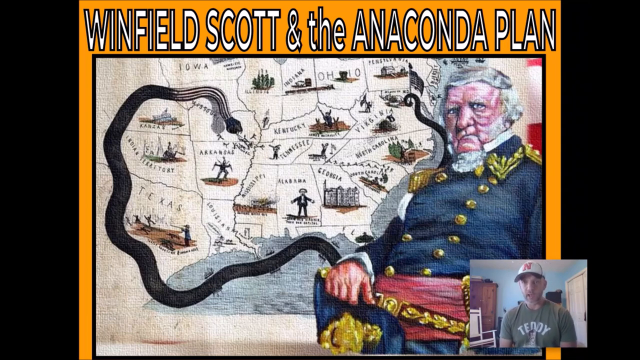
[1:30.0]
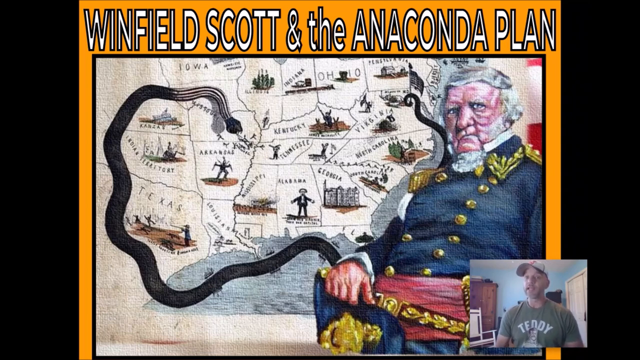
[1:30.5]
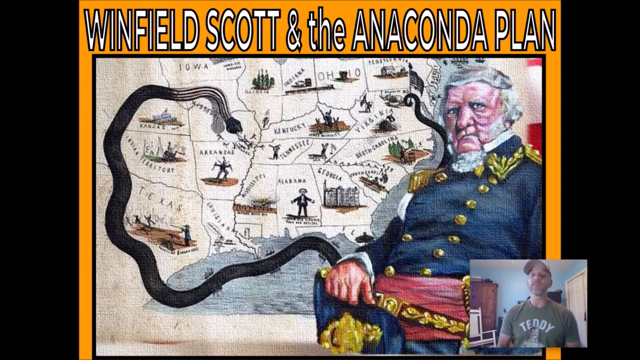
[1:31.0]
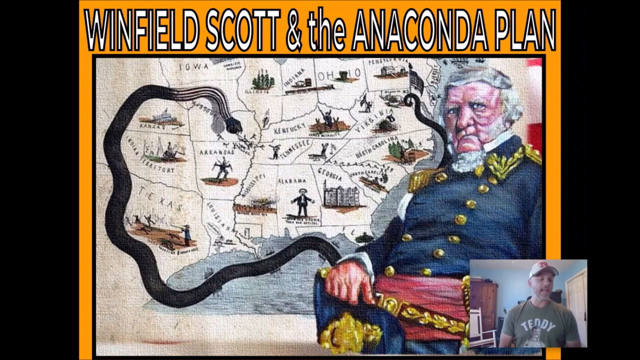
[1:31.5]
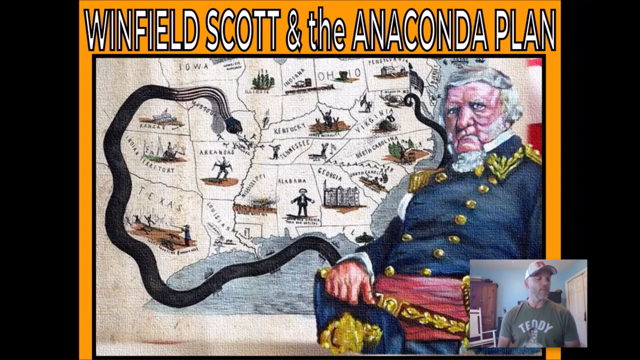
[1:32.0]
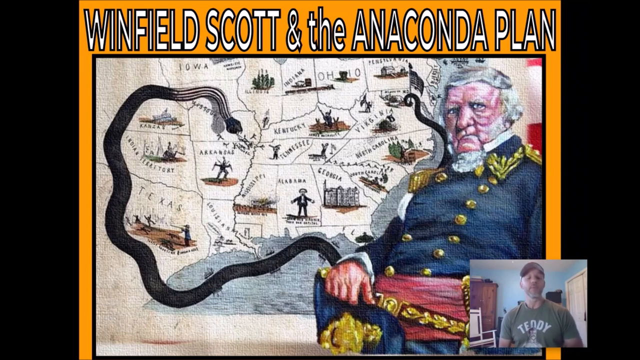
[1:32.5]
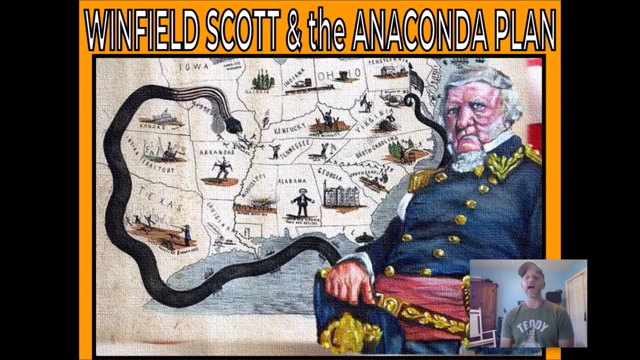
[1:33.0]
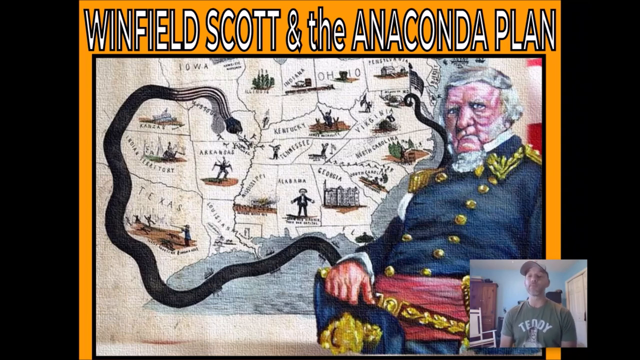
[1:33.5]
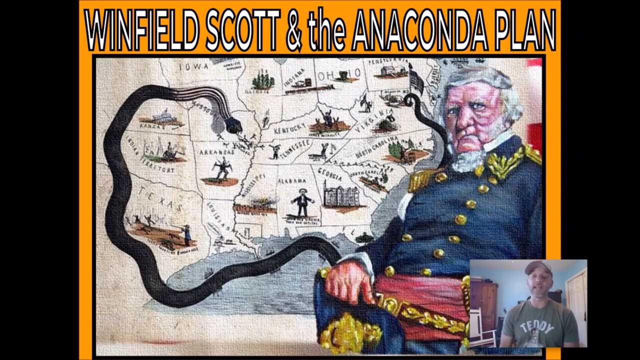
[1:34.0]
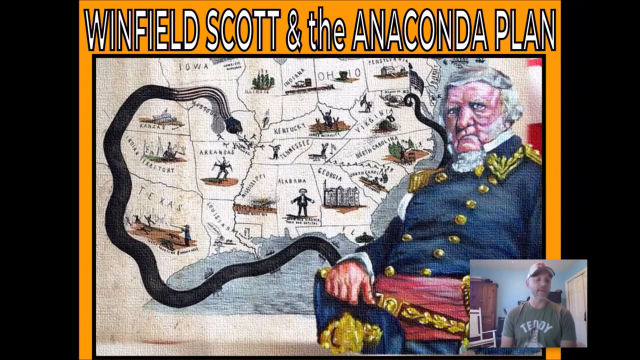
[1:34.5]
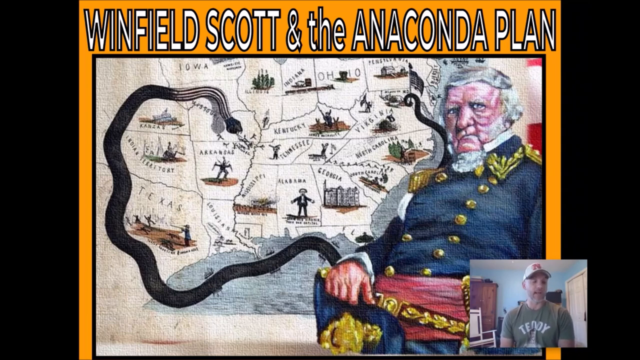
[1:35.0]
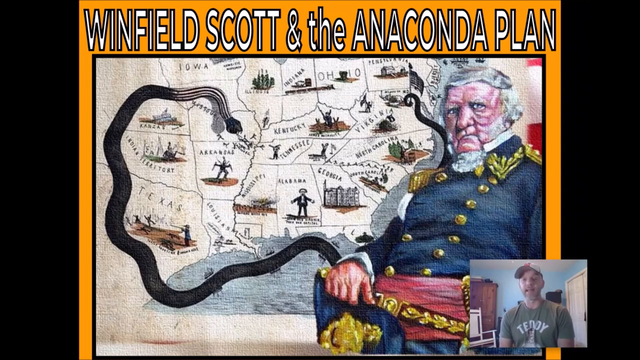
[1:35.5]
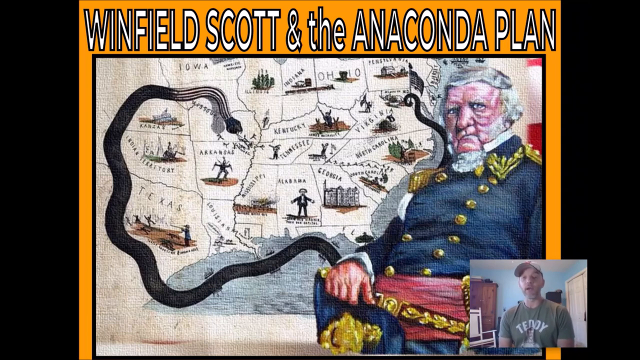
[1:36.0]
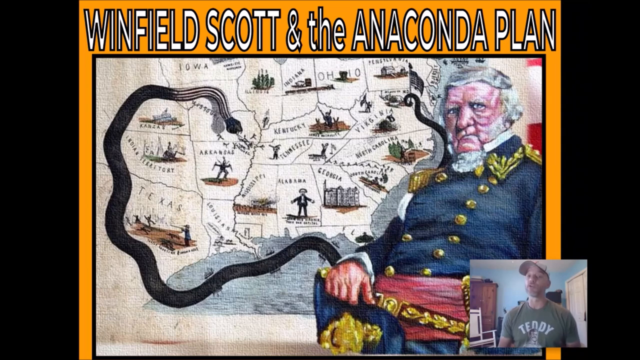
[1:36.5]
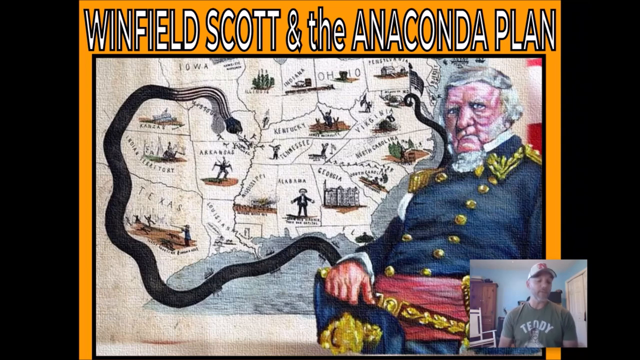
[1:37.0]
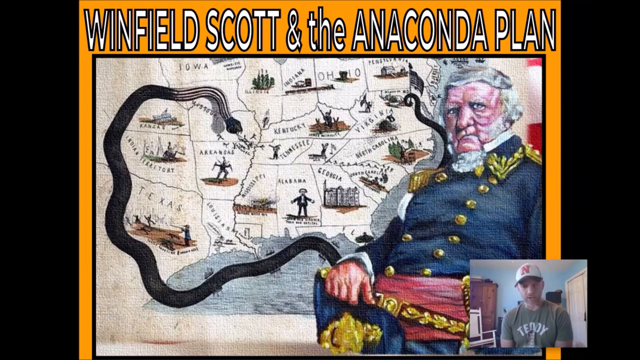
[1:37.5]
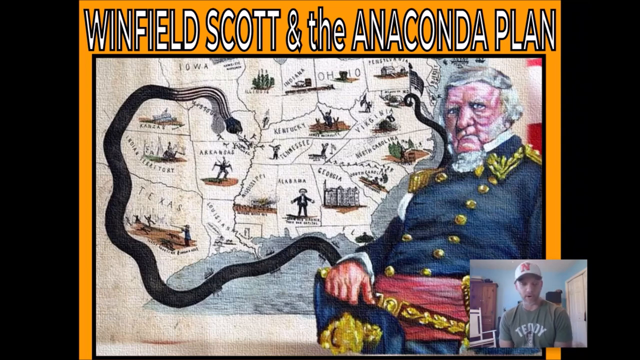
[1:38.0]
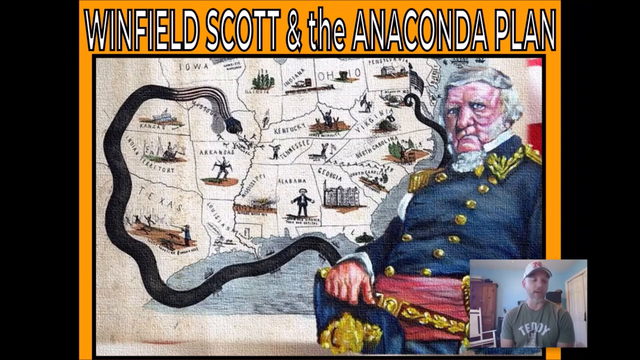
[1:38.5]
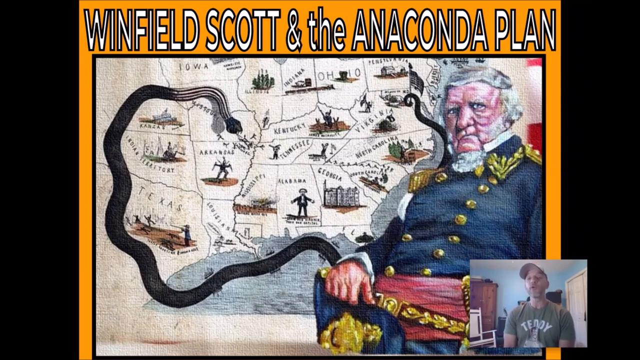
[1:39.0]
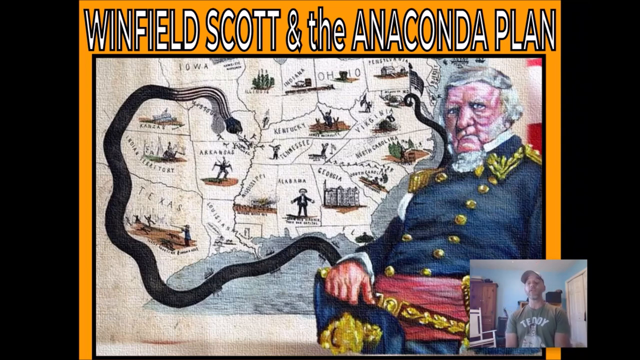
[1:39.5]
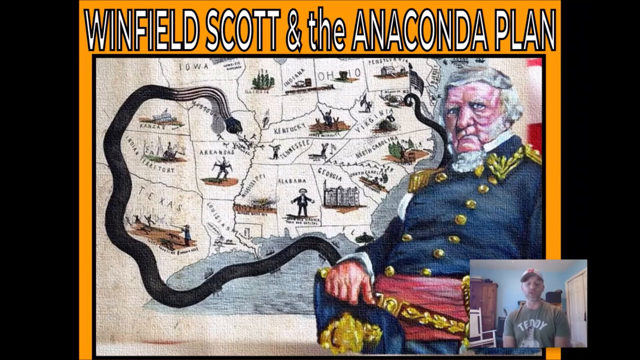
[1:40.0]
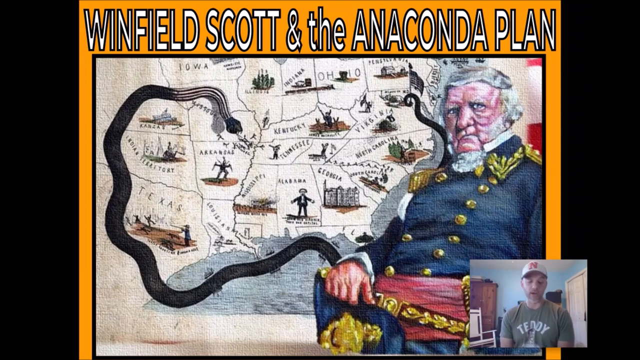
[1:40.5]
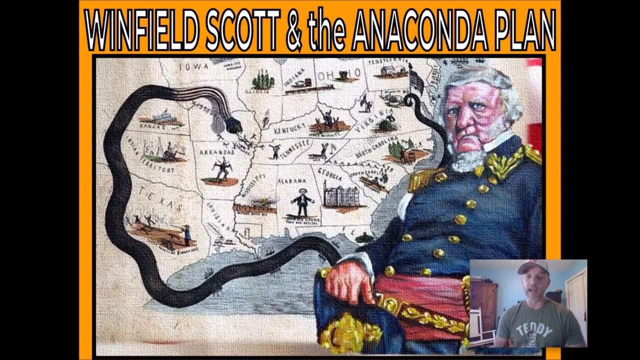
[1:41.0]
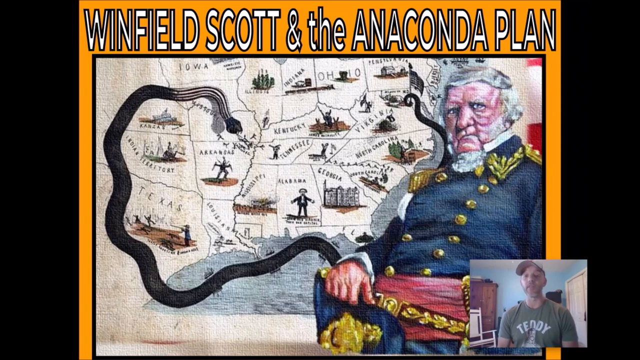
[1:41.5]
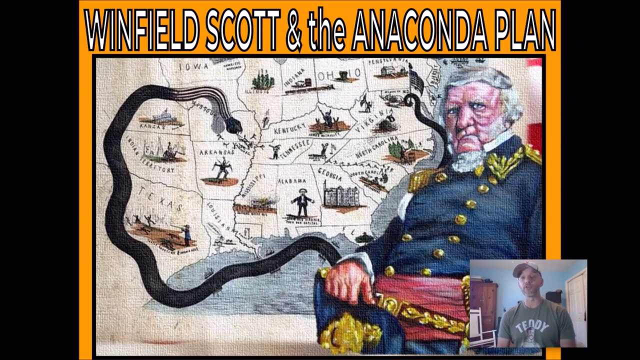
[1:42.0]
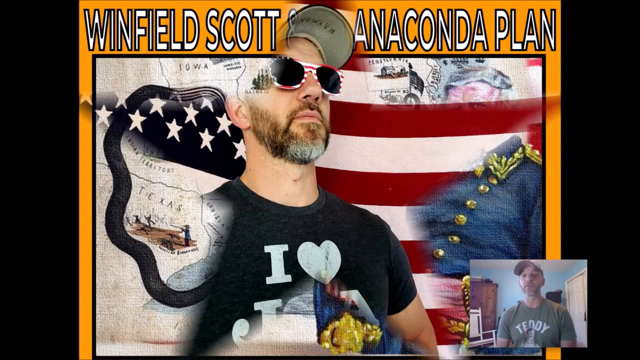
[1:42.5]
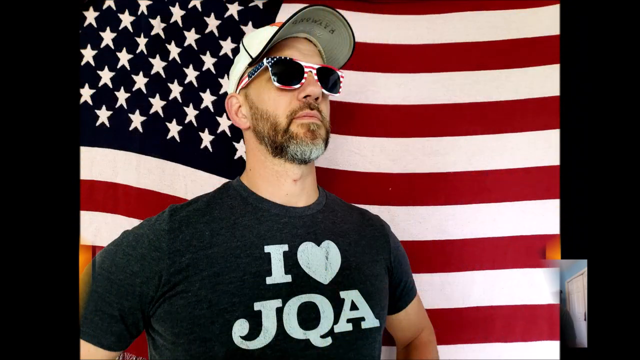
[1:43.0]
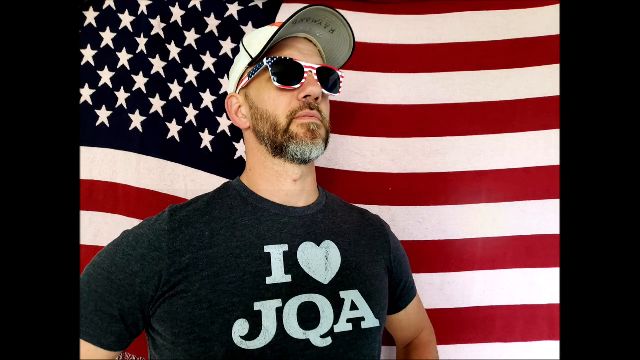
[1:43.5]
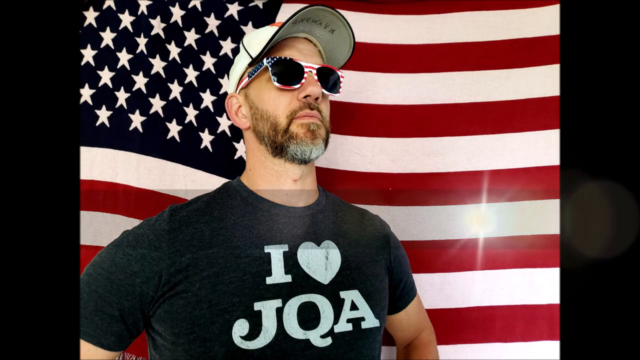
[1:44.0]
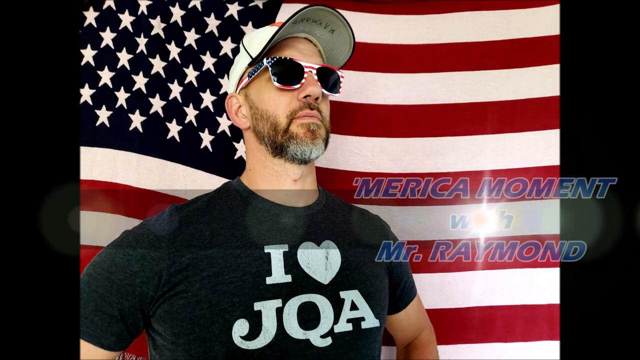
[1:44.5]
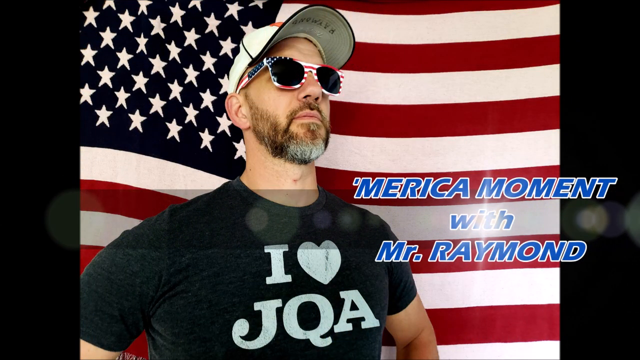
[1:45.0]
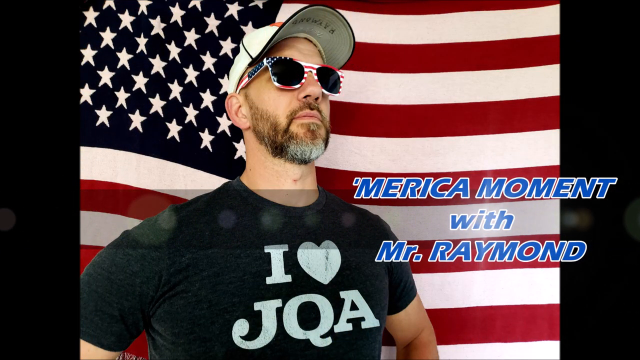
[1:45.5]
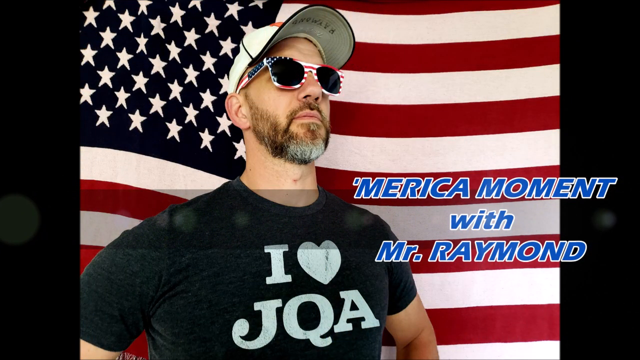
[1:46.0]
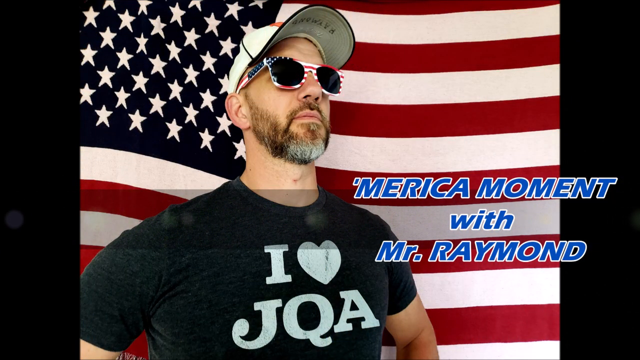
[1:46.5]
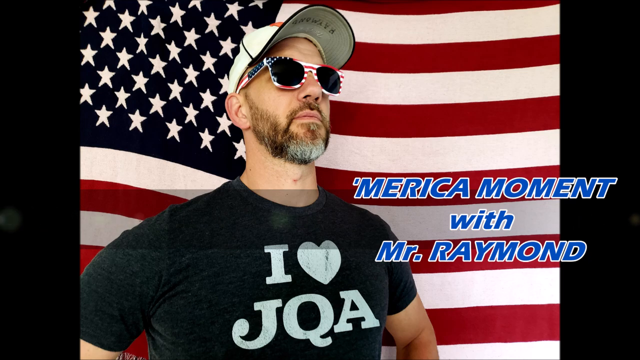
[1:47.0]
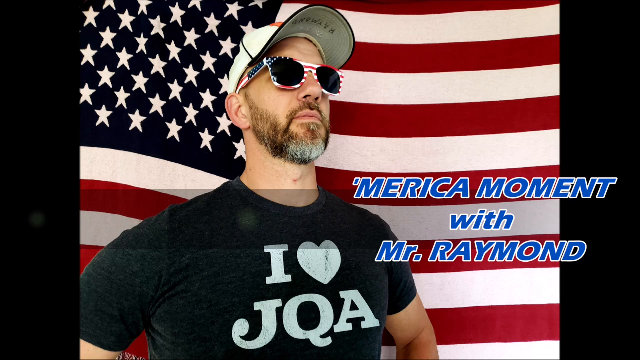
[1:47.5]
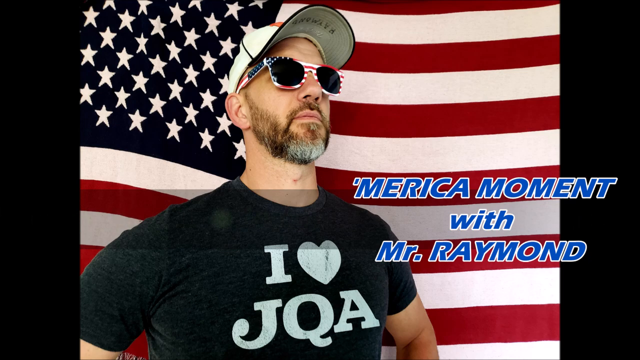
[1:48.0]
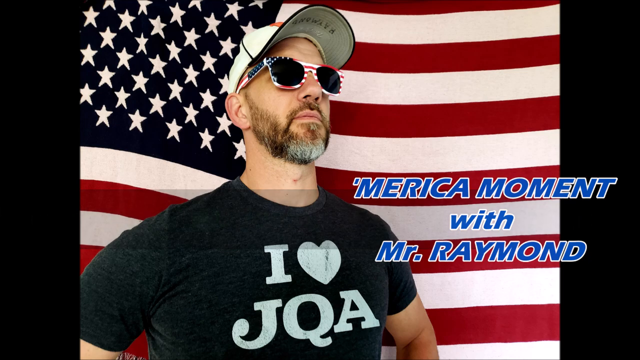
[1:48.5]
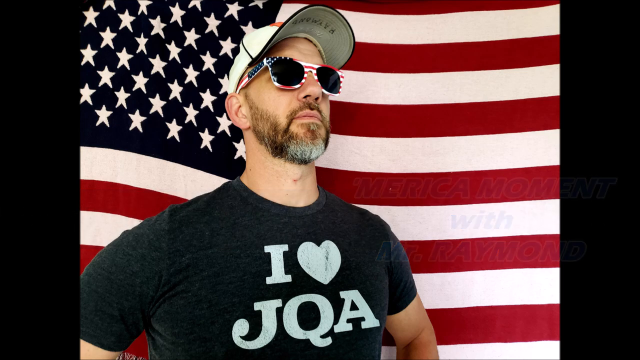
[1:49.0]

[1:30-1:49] The same picture labeled "Winfield Scott and the Anaconda Plan" continues, with several U.S. states underneath the title. Next to the states are a couple of symbols and drawings. The states are outlined by a very big black snake with some white stripes toward the center of its head. On the right side of the picture is an elderly man wearing a blue and yellow soldier uniform. In the lower right-hand corner, the same man speaks into the camera. As the video ends, it returns to the picture from the very beginning of the man posing for the camera. He wears a black shirt with the white words "I", a heart sign and "JOA", a black and white hat, and sunglasses whose frames are outlined with the American flag. The American flag is behind him in the background, and on the right side of the screen it says "America moment with Mr. Raymond".